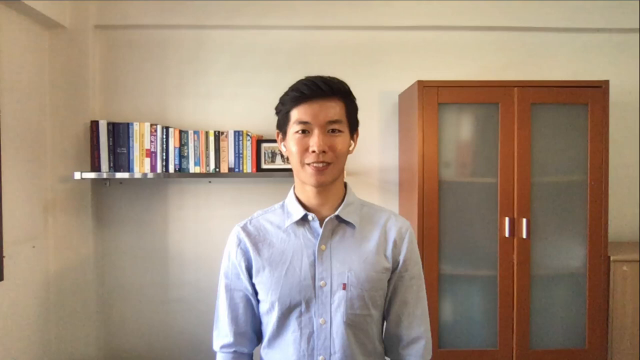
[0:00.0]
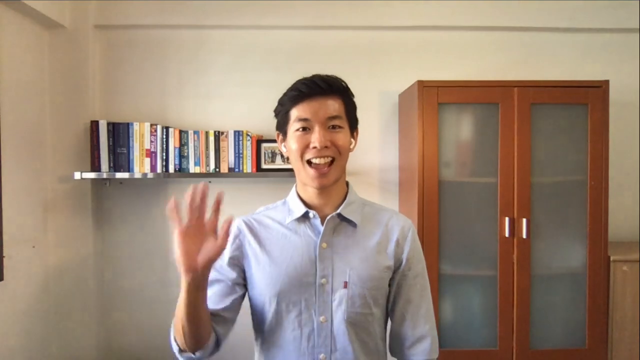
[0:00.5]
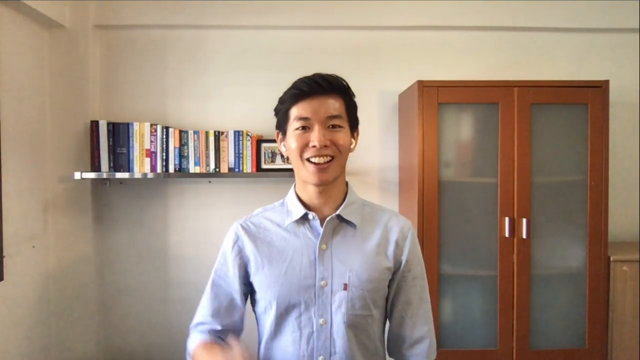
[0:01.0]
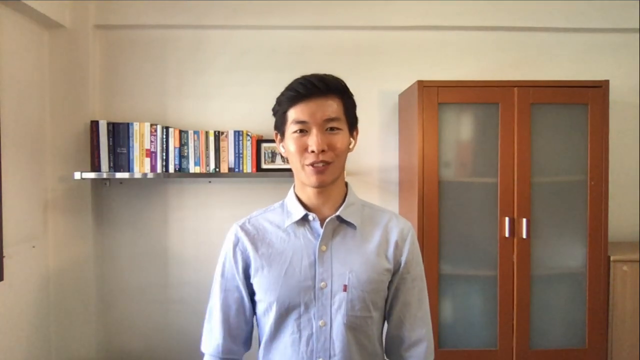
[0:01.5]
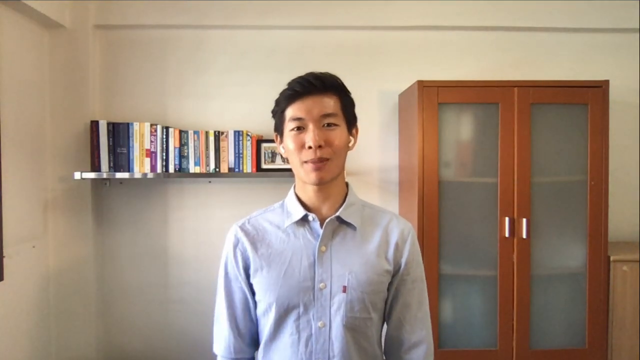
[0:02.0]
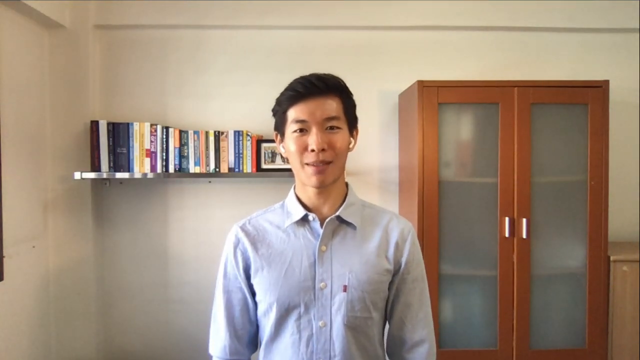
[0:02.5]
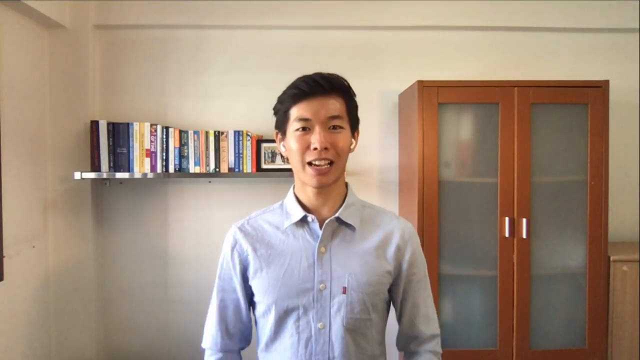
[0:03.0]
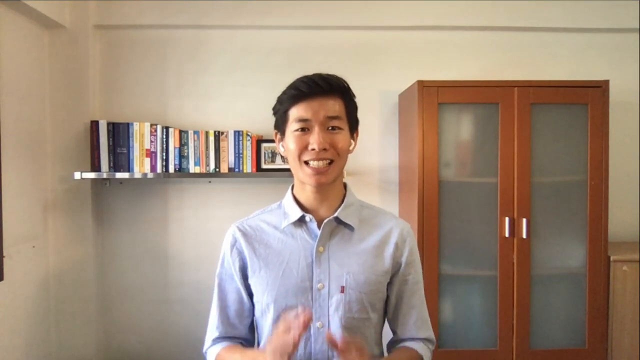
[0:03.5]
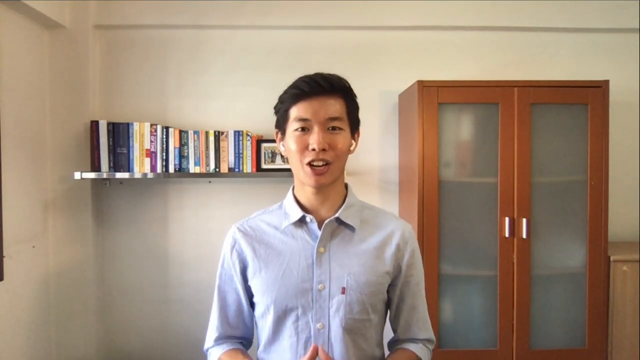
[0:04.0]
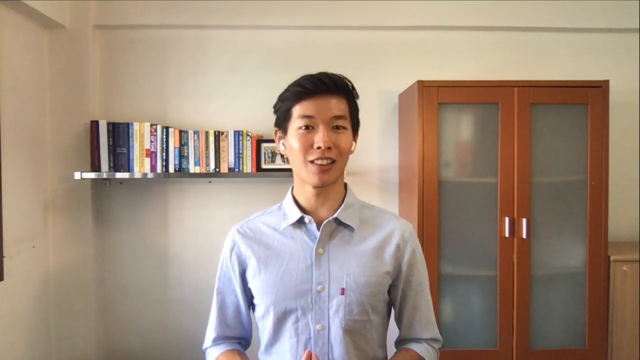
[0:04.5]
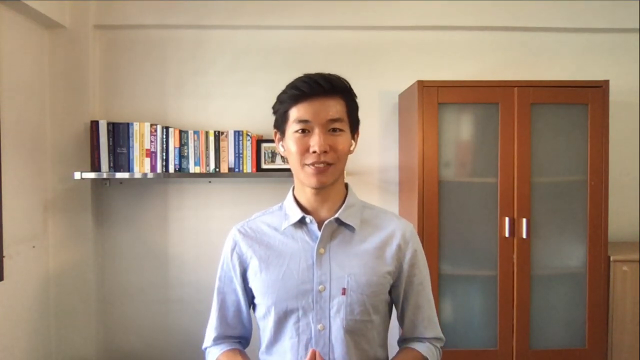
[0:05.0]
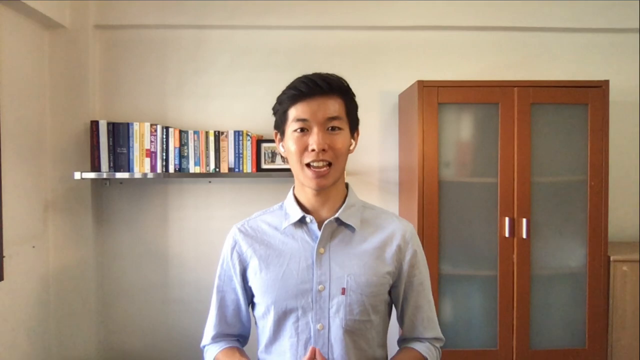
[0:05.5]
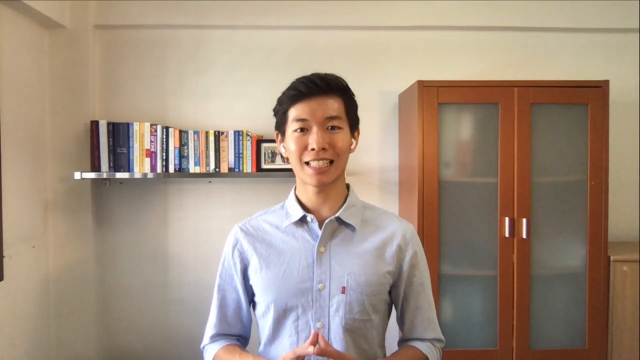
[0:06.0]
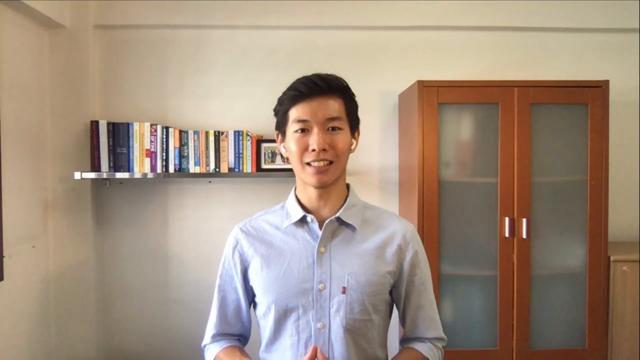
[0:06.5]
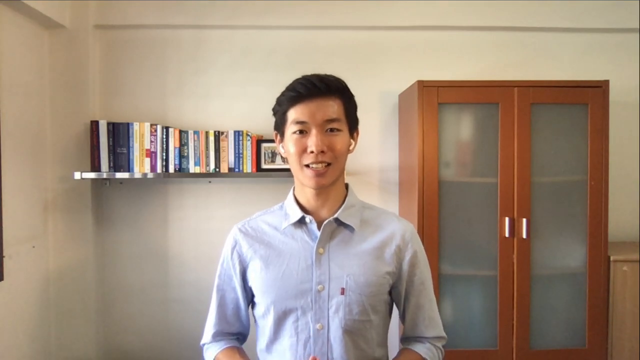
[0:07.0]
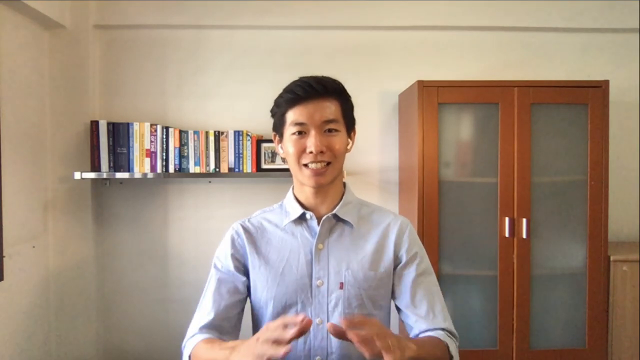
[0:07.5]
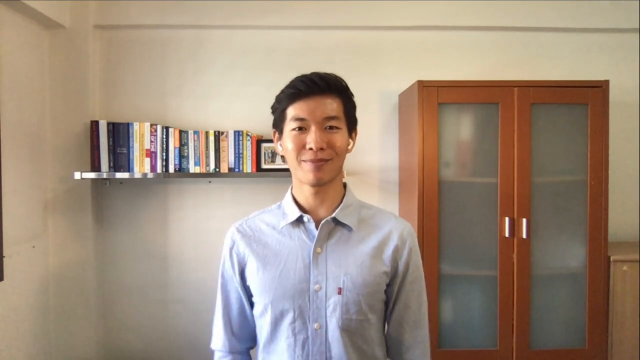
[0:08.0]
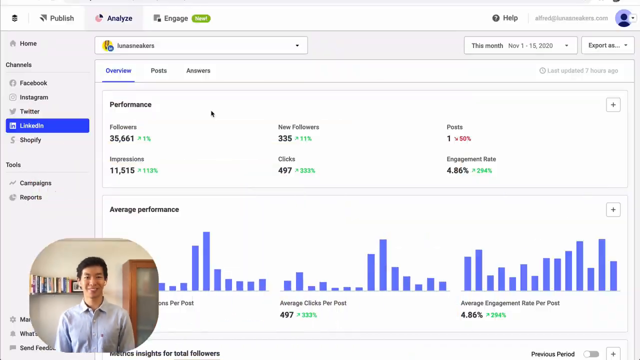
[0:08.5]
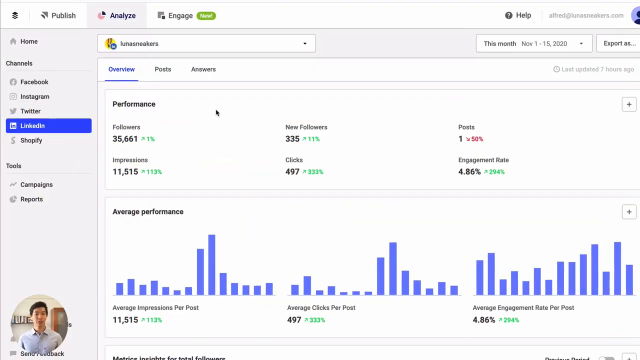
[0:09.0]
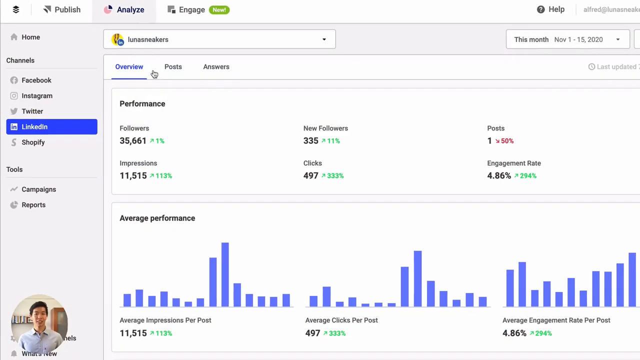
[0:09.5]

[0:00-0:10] An Asian man, seemingly in his late 20s or early 30s, stands in an almost empty room wearing a wrinkled, long-sleeved, pale blue button-up shirt. Behind him is a tall standing cabinet with foggy glass, with only sparse things inside. To the right of it is another cabinet or table, and to the left is a metal shelf holding a great many books and a picture frame, seemingly of a wedding. The man has dark hair, wears AirPods and has his sleeves rolled up; he addresses the camera, talking to it and raising his hands. Eventually his video shrinks and circles down to reveal some sort of software or website showing a large amount of analytics on an analyze tab.